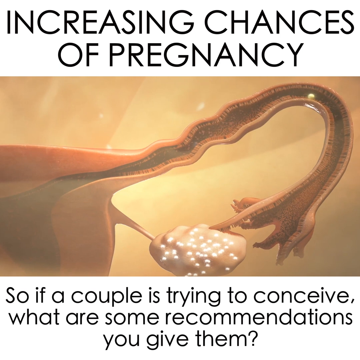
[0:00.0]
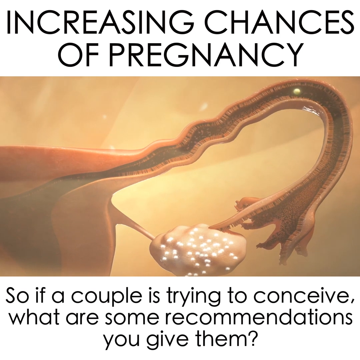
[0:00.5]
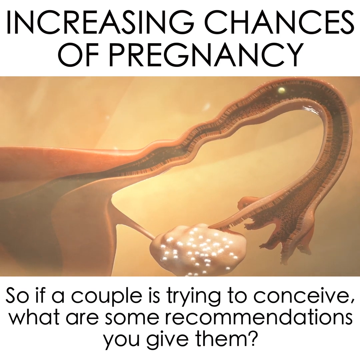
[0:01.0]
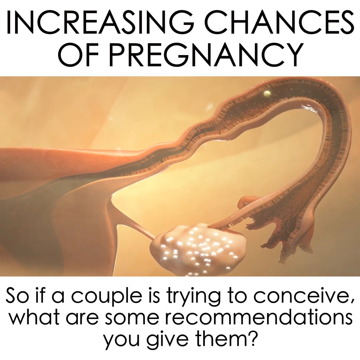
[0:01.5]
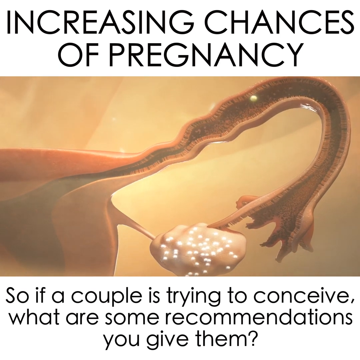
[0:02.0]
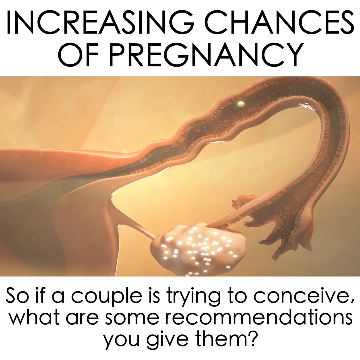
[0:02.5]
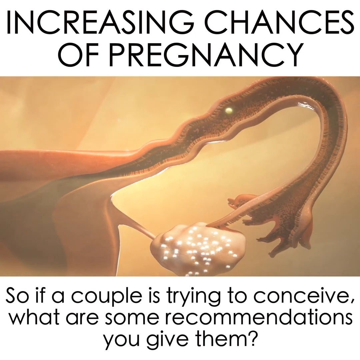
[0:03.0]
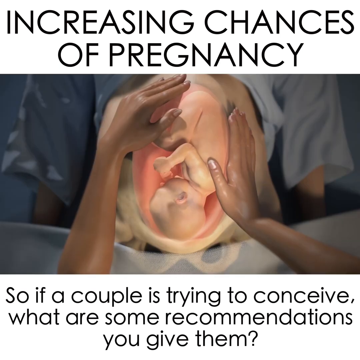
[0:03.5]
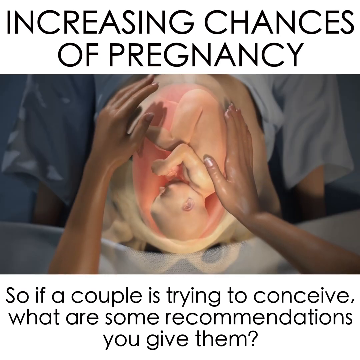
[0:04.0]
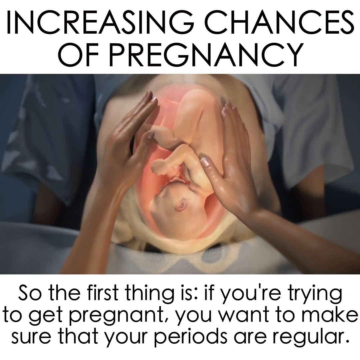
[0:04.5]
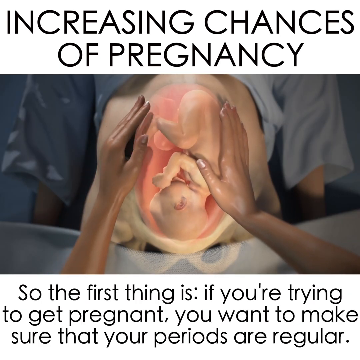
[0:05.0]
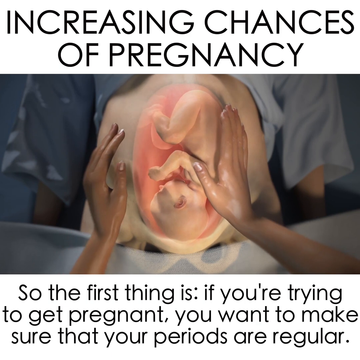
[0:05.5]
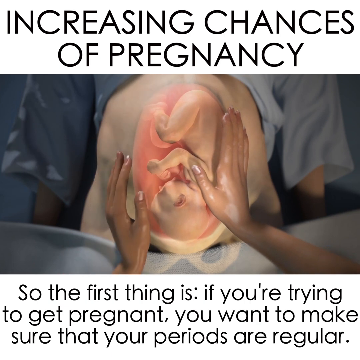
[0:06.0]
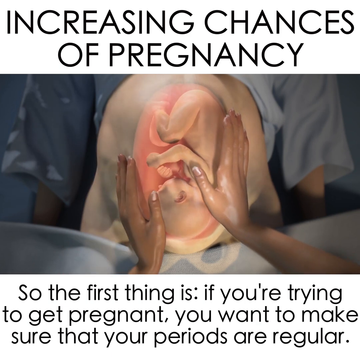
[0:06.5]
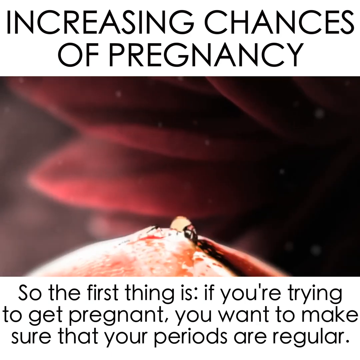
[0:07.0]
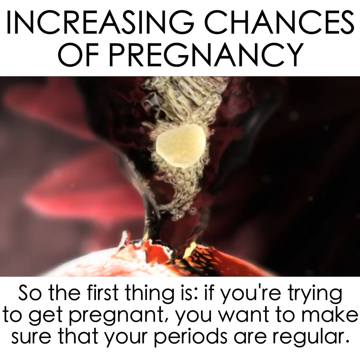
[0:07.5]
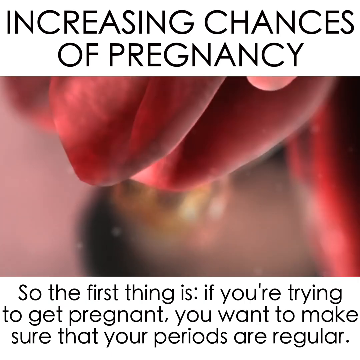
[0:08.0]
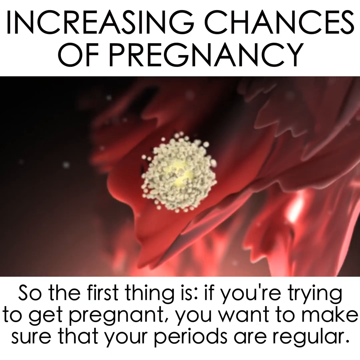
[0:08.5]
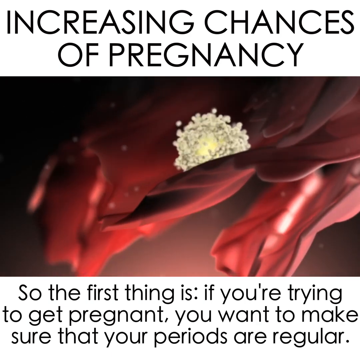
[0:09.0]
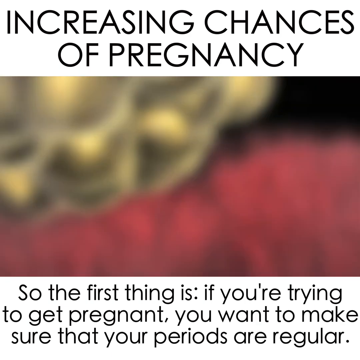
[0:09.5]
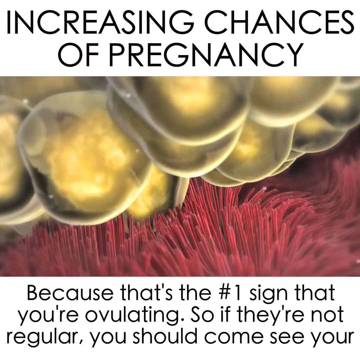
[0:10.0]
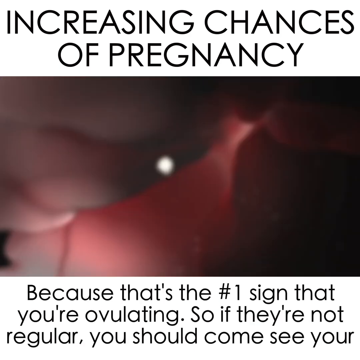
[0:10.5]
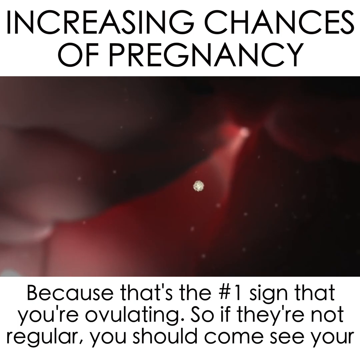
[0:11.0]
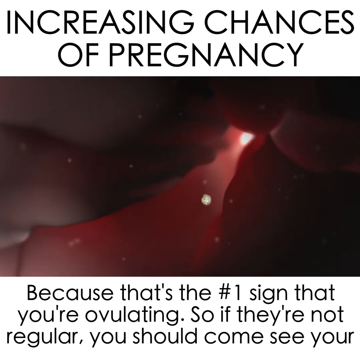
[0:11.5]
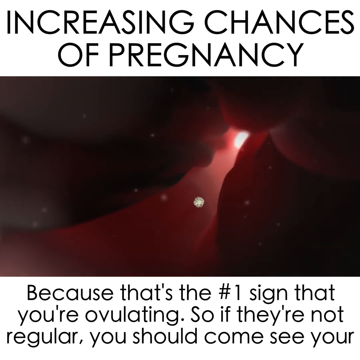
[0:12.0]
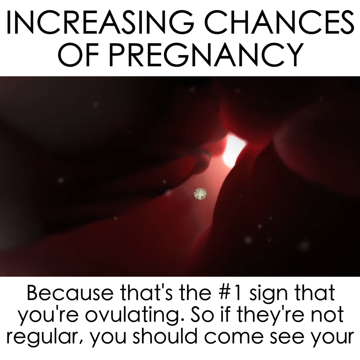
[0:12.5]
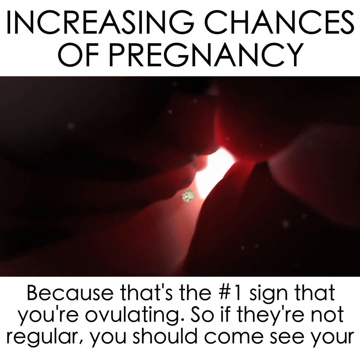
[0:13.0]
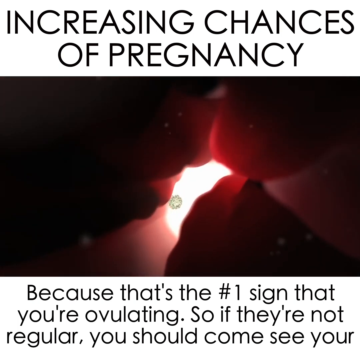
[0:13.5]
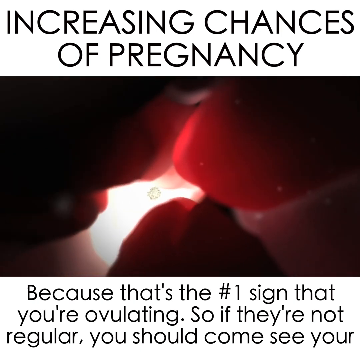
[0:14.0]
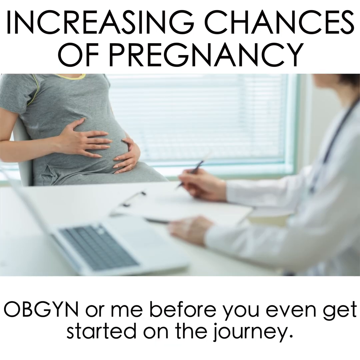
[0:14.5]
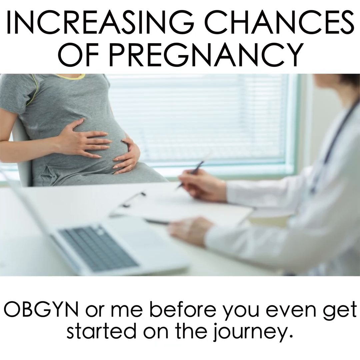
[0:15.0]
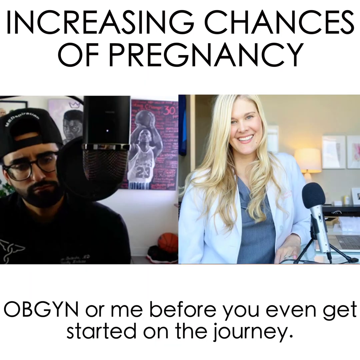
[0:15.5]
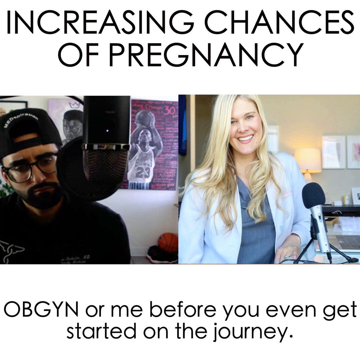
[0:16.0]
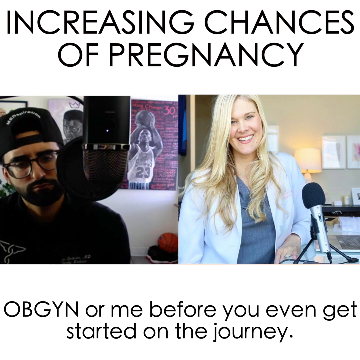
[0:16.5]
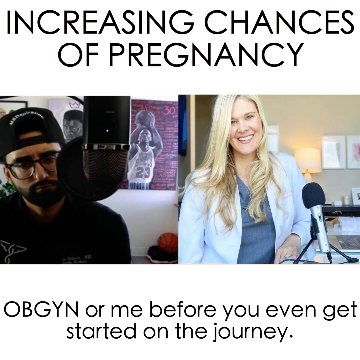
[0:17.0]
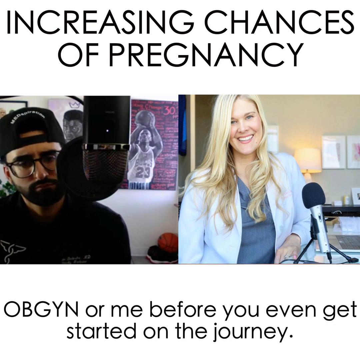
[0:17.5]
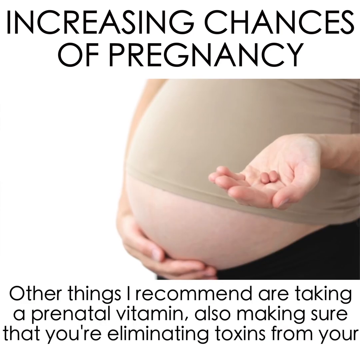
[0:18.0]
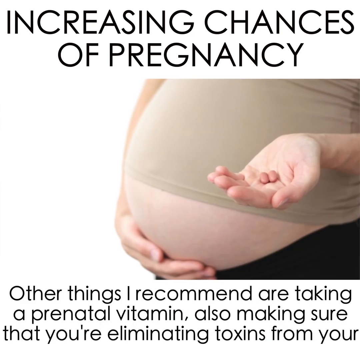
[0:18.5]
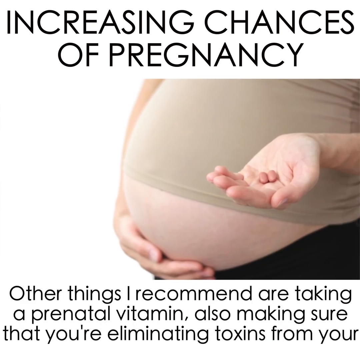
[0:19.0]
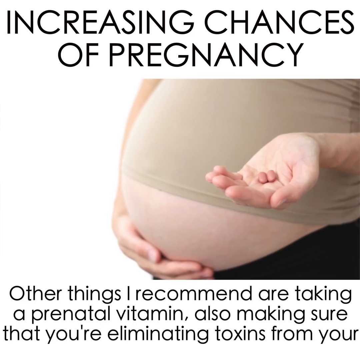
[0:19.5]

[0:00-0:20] An animation that looks like a fairly detailed depiction of eggs ovulating through the fallopian tube, apparently, plays while a graphic on the first screen reads "so if a couple is trying to conceive, what are some of your recommendations you give them?" With the animation still running, he says, "so the first thing is, if you're trying to get pregnant, you want to make sure that your periods are regular." The animation shows a baby visible in the mother's stomach, followed by a close-up animation of what is apparently the egg coming out. Text reads "because that's the number one sign that you're ovulating. So if they're not regular, you should come see your OB-GYN or me before you even get started on the journey. Other things I recommend are taking a prenatal vitamin, also making sure that you're eliminating toxins." While the person is saying to come see them, the video cuts to a picture of a lady with a microphone and then a guy shaking his head. The next shot shows a pregnant lady holding two prenatal vitamins.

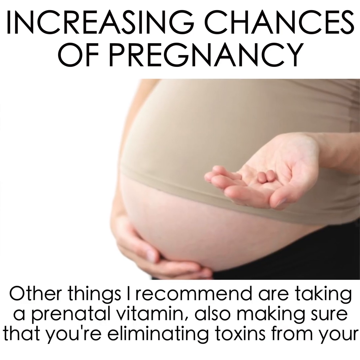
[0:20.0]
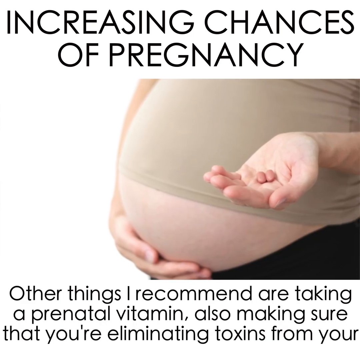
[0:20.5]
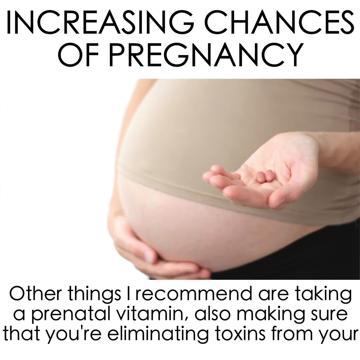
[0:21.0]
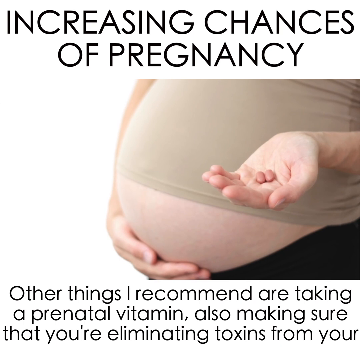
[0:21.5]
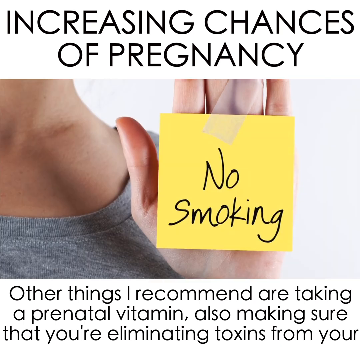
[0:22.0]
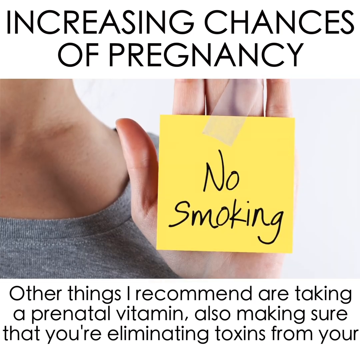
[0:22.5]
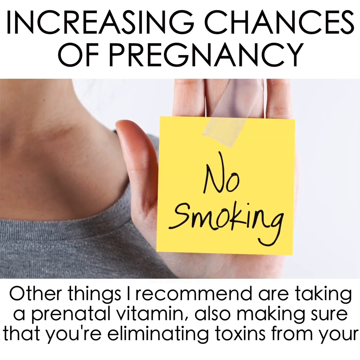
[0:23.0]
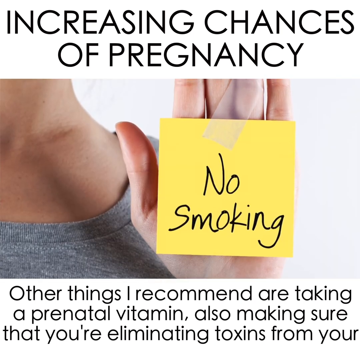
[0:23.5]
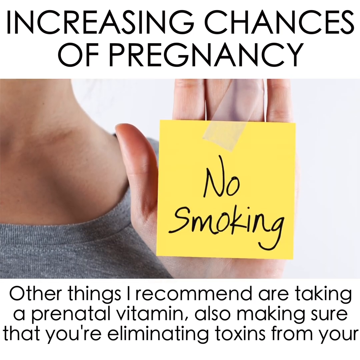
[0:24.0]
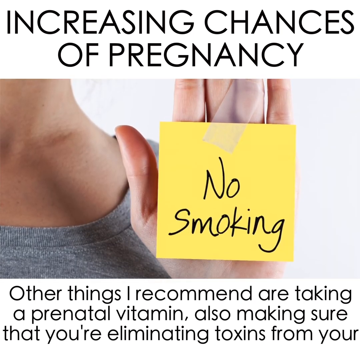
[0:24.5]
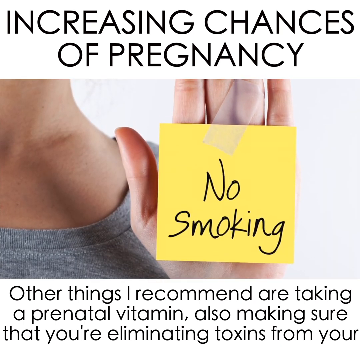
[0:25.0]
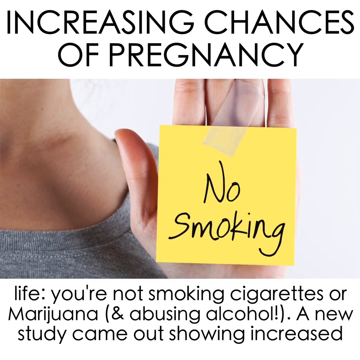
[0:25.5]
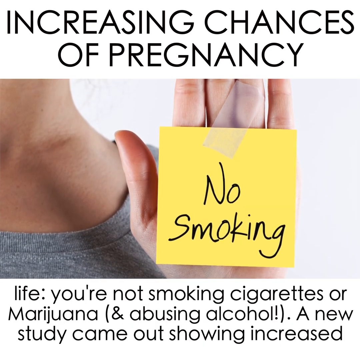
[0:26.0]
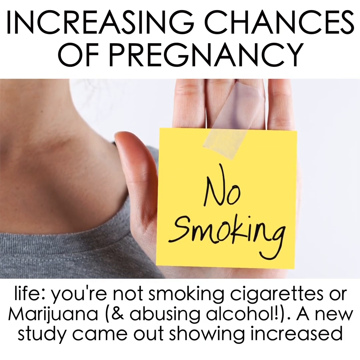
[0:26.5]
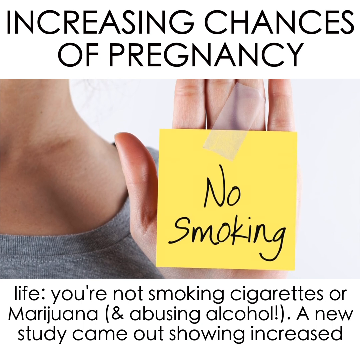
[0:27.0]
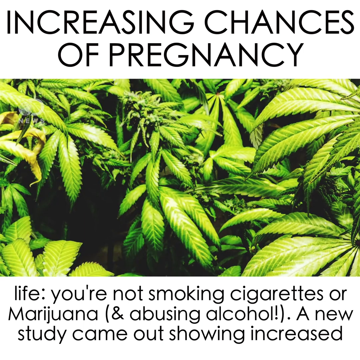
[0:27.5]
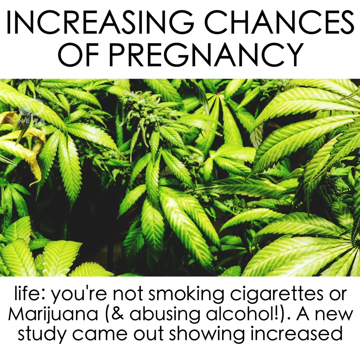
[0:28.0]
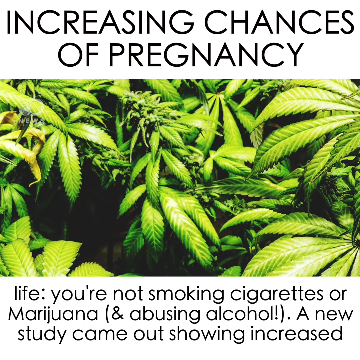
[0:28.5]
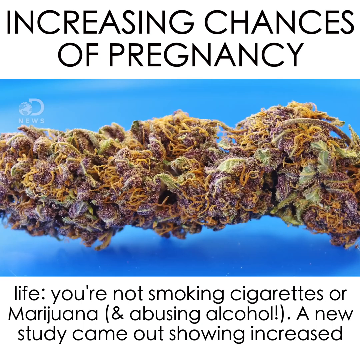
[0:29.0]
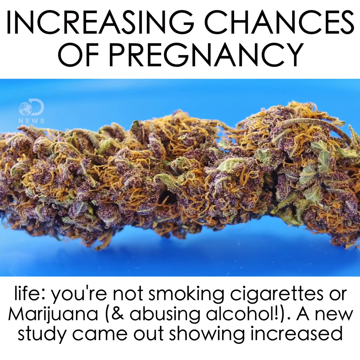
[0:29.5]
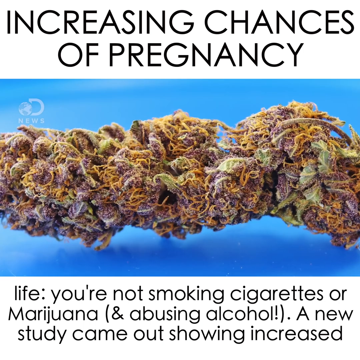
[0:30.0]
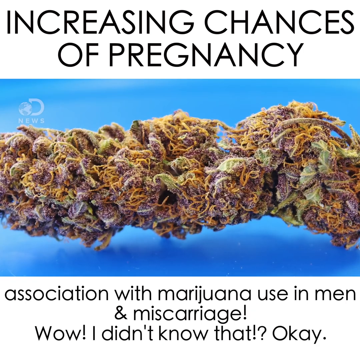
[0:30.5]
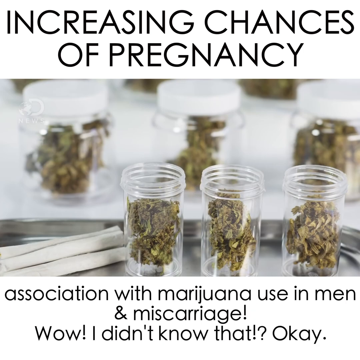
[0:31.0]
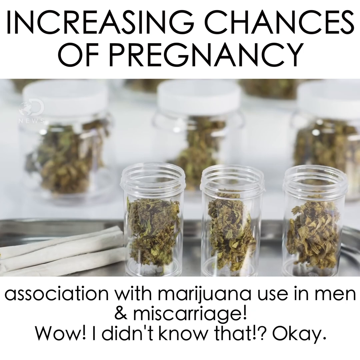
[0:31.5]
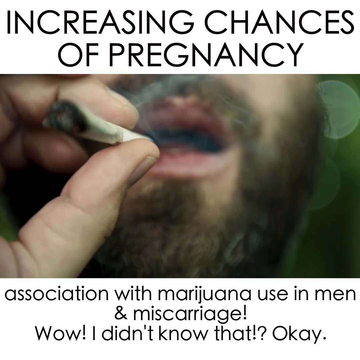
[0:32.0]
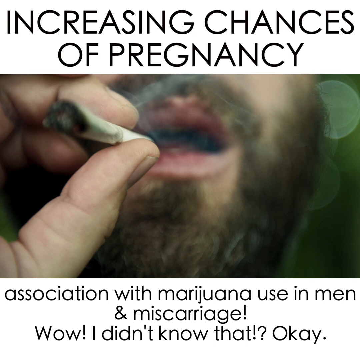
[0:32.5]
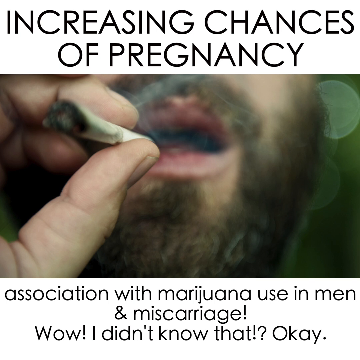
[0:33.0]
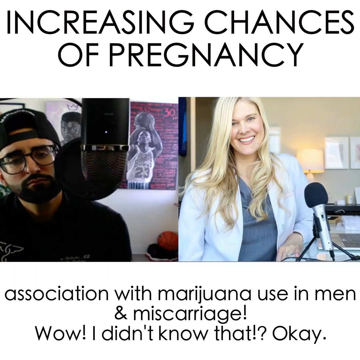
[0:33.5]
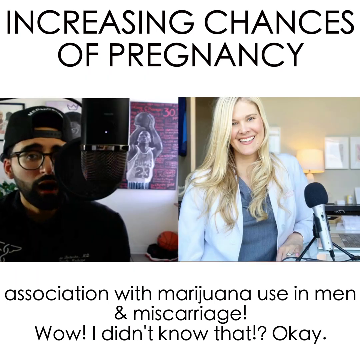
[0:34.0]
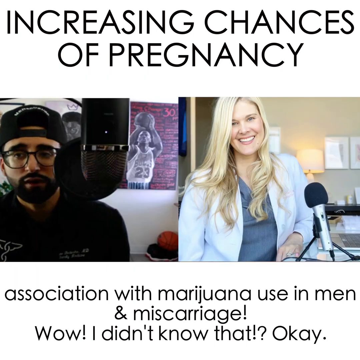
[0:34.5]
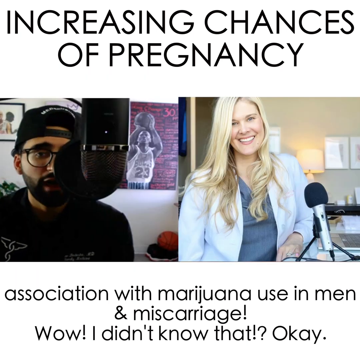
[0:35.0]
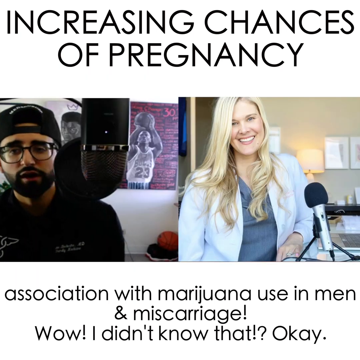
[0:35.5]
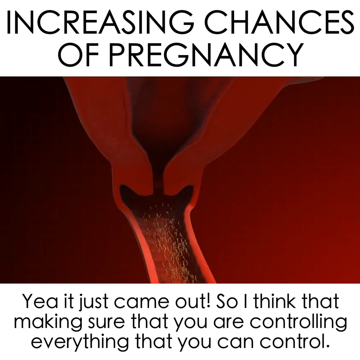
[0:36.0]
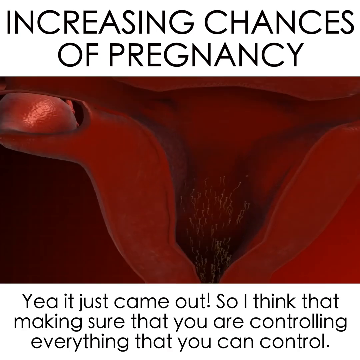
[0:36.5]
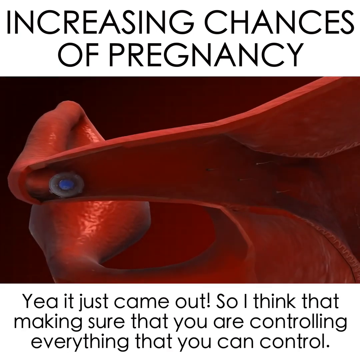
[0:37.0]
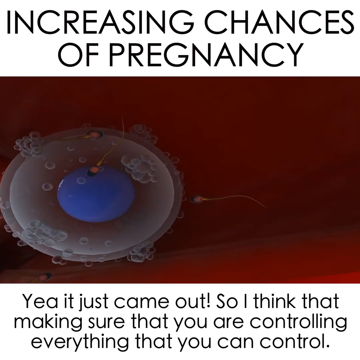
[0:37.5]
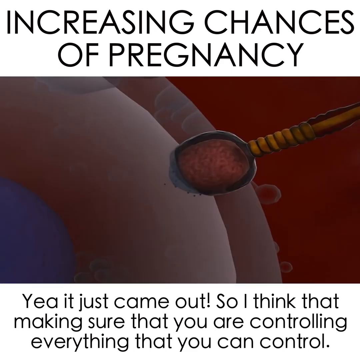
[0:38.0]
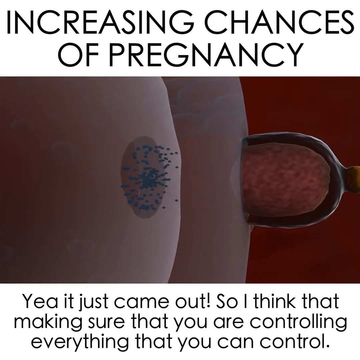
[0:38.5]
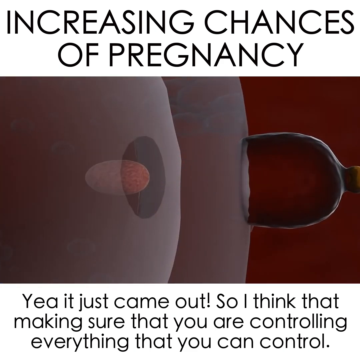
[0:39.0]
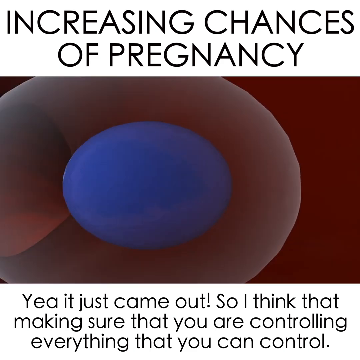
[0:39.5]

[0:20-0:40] The text continues, "other things I recommend are taking a prenatal vitamin. Also make sure that you're eliminating toxins from your," over a graphic of a lady holding up a yellow sticky note that says "no smoking." The next screen's text reads "toxins from your life, you're not smoking cigarettes or marijuana and abusing alcohol. A new study came out showing increased," followed by an image with a whole bunch of pot leaves and then an actual bud of marijuana. The next graphic reads "association with marijuana use in men and miscarriage." More shots show marijuana in pint jars and then a person's face with a joint held to it. The video cuts back to the graphic of the lady and the guy with the cap, with "yeah, it just came out" at the bottom. Text then reads "making sure you're controlling everything you can control," while the animation, apparently still of ovulation, plays.